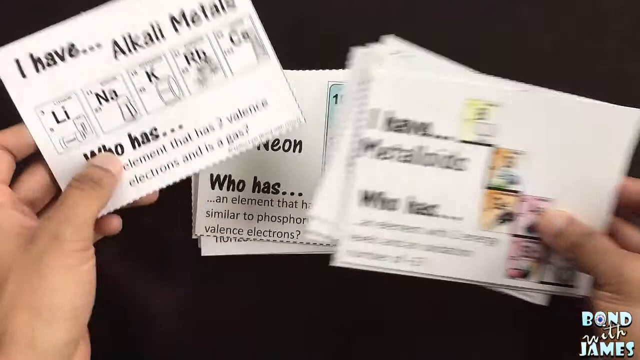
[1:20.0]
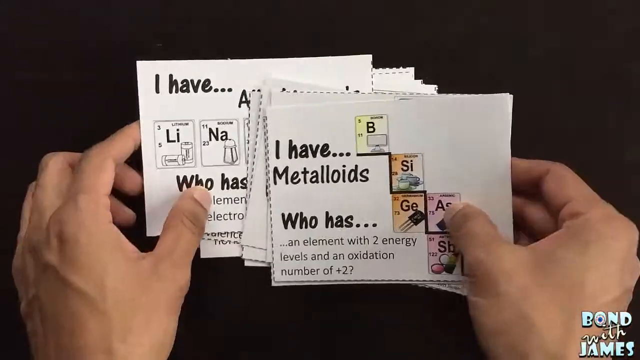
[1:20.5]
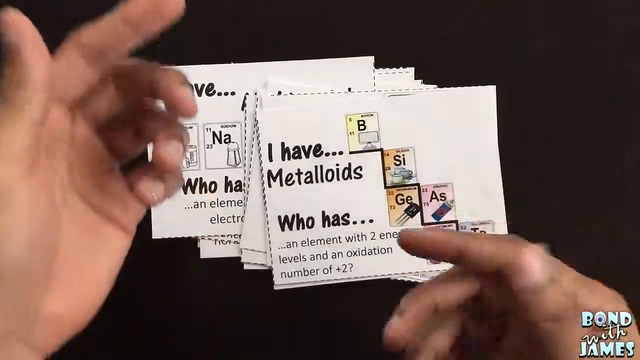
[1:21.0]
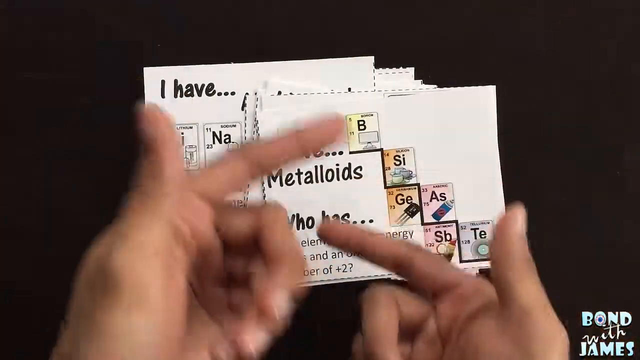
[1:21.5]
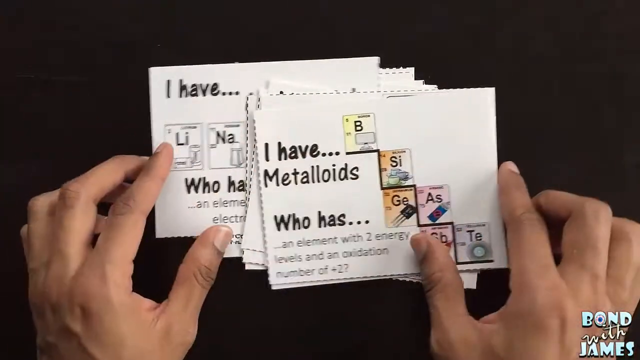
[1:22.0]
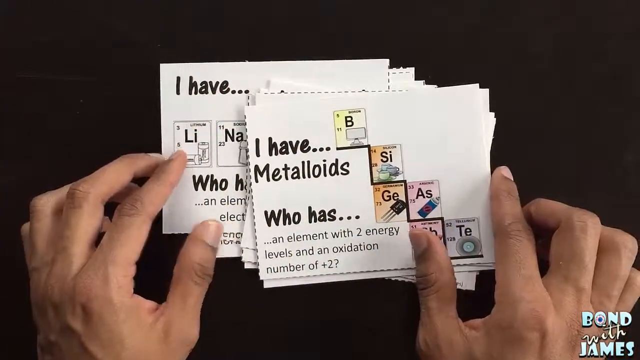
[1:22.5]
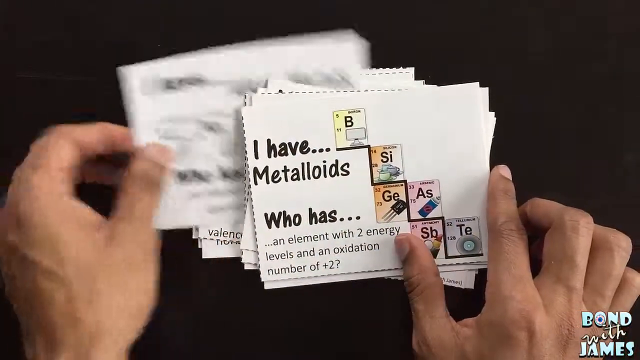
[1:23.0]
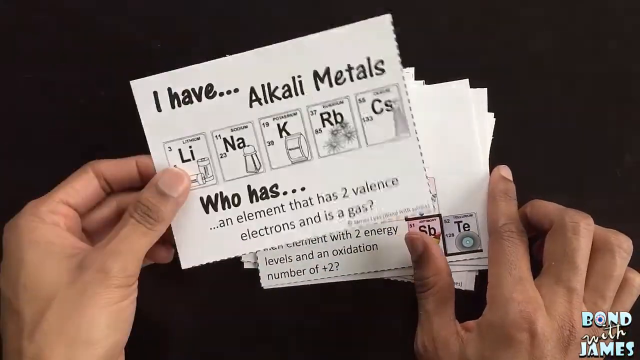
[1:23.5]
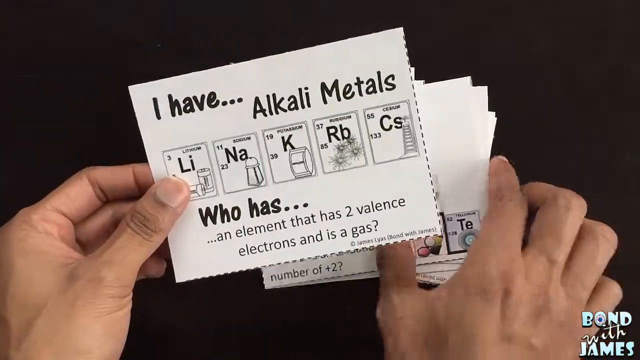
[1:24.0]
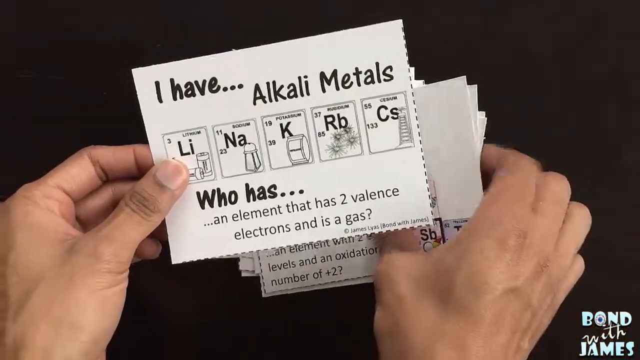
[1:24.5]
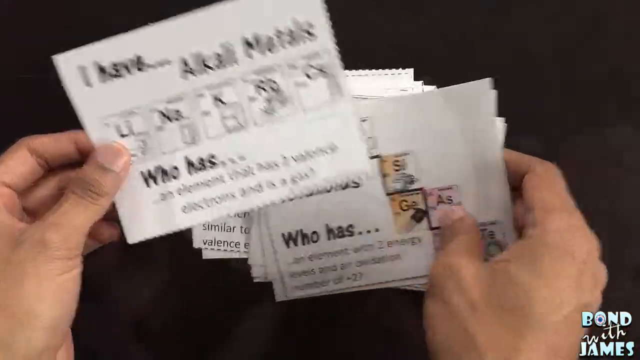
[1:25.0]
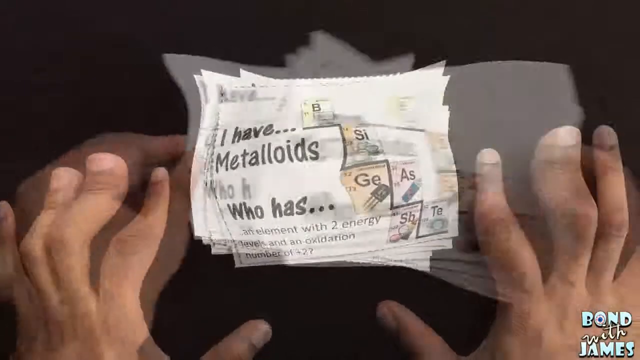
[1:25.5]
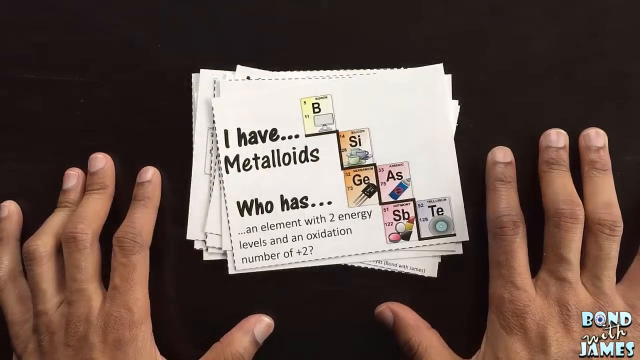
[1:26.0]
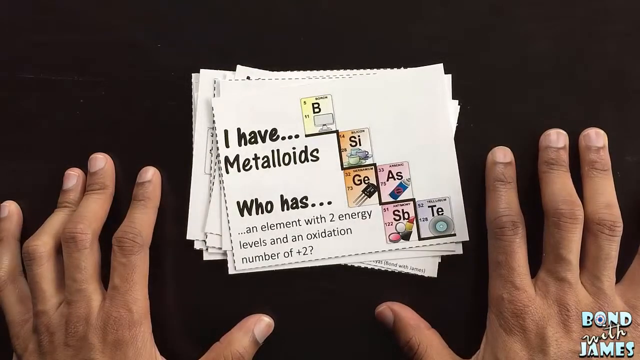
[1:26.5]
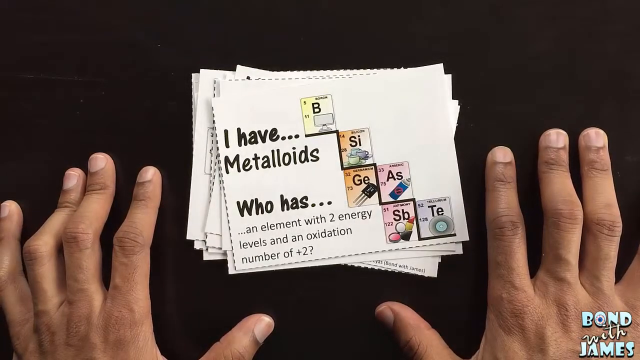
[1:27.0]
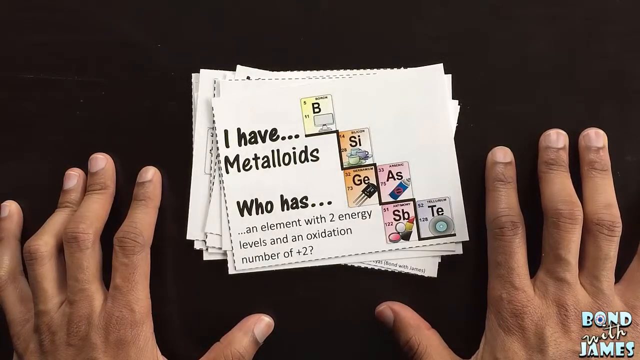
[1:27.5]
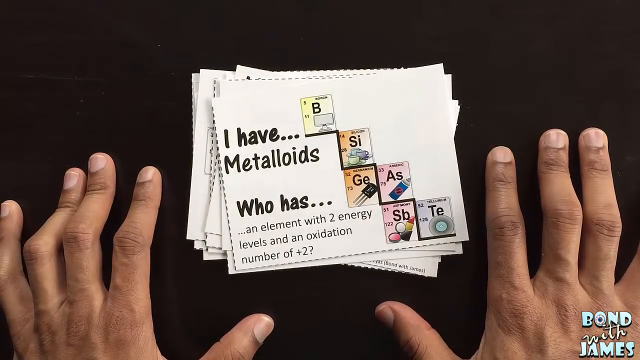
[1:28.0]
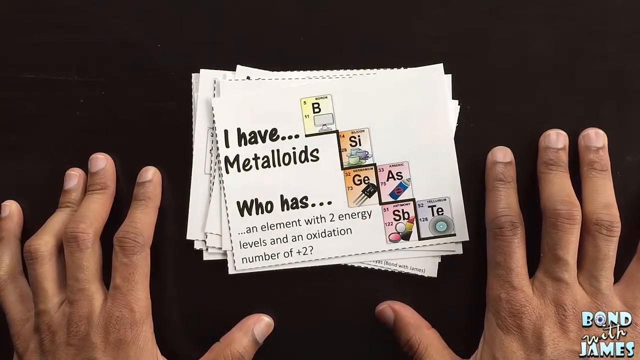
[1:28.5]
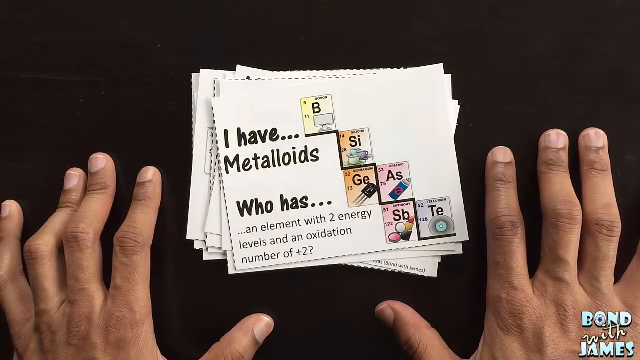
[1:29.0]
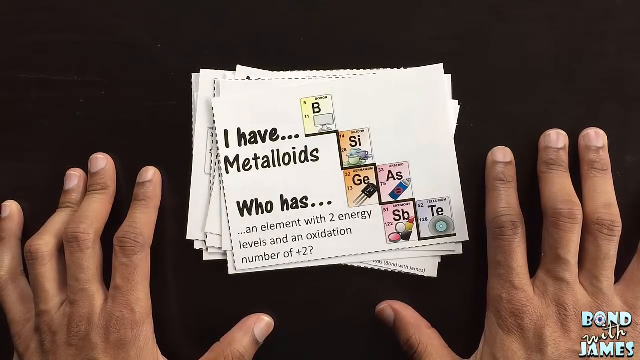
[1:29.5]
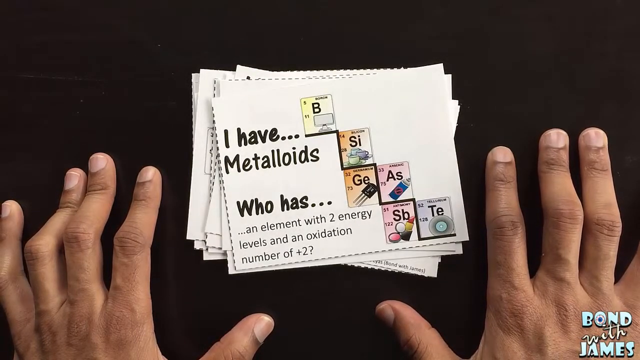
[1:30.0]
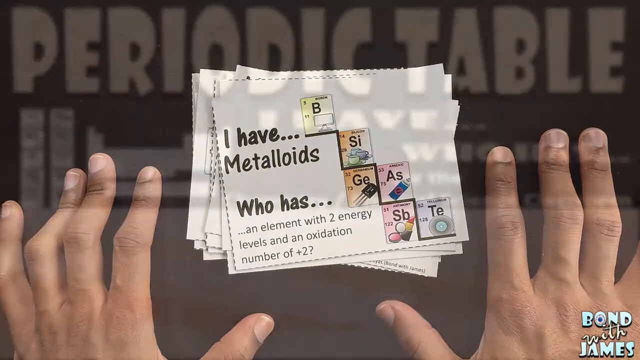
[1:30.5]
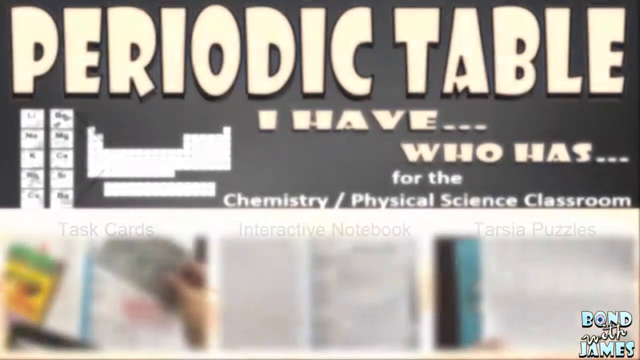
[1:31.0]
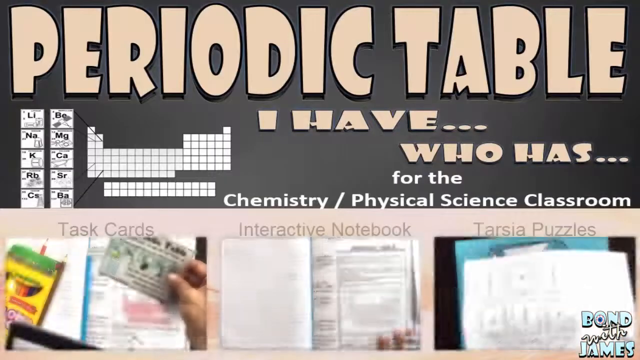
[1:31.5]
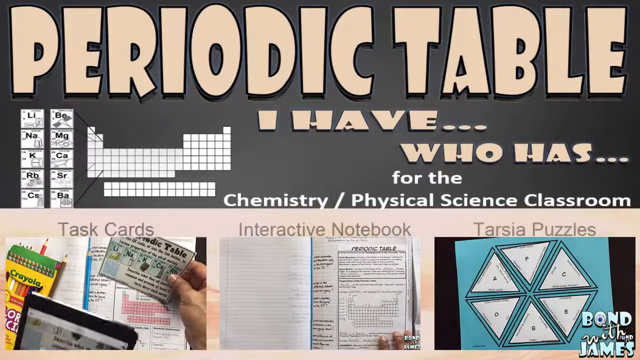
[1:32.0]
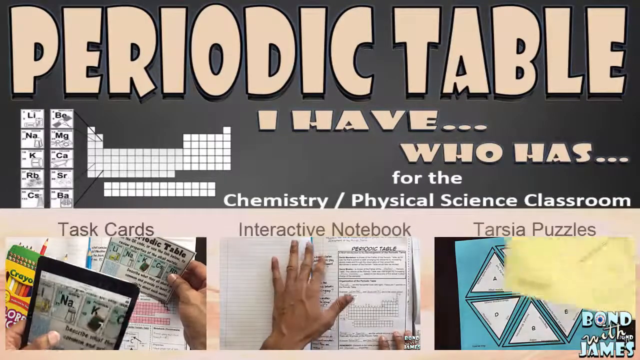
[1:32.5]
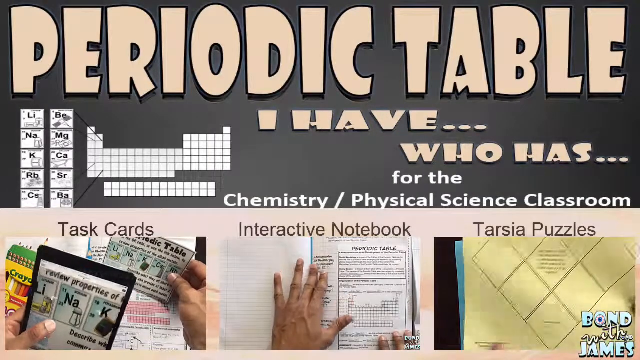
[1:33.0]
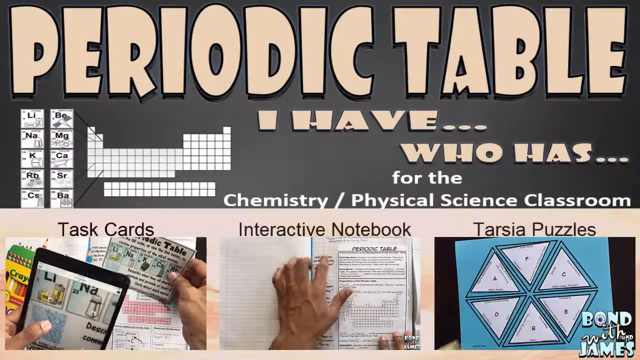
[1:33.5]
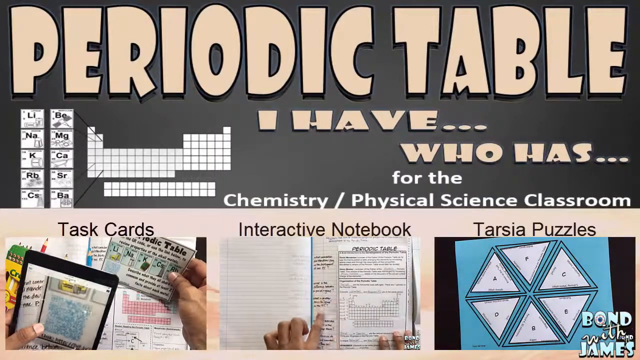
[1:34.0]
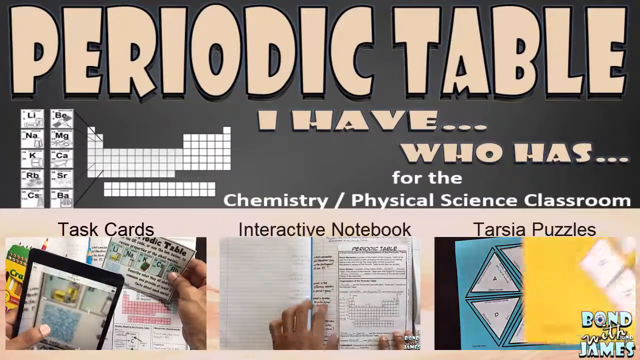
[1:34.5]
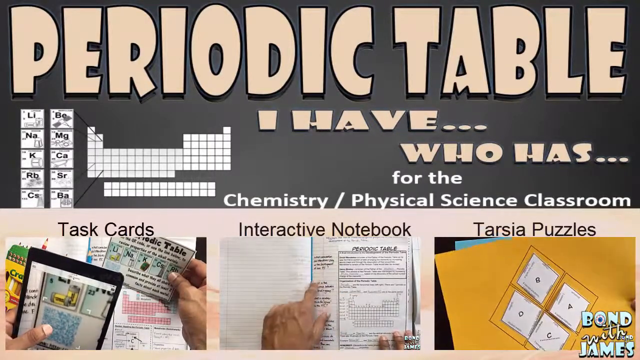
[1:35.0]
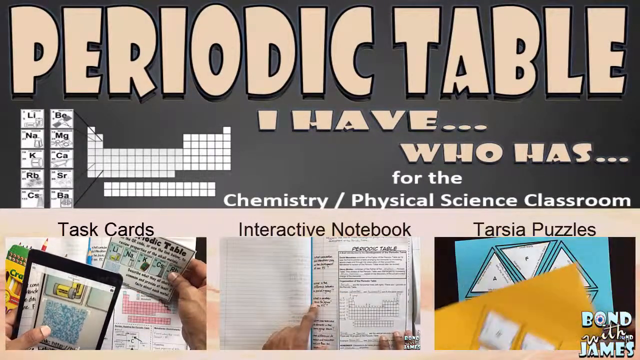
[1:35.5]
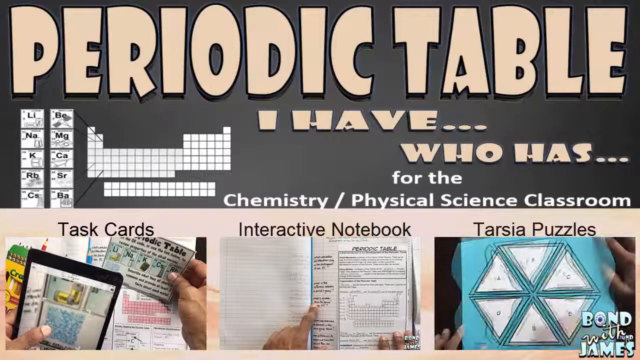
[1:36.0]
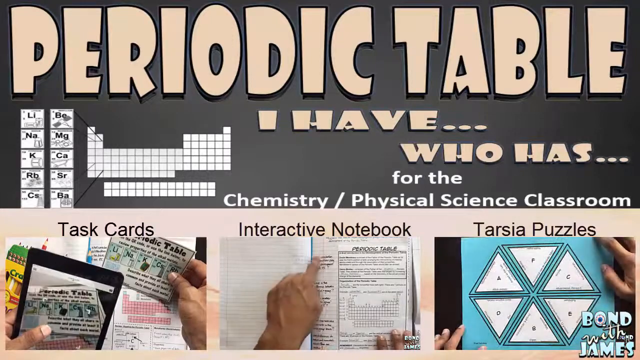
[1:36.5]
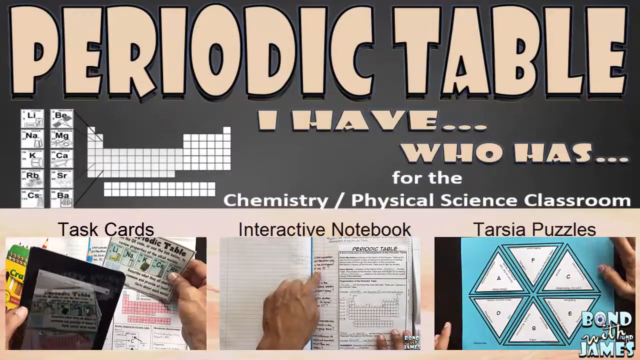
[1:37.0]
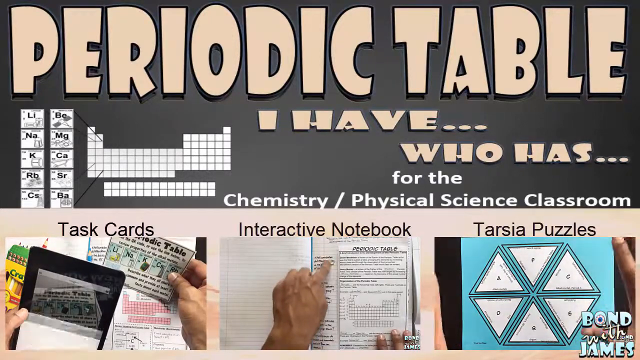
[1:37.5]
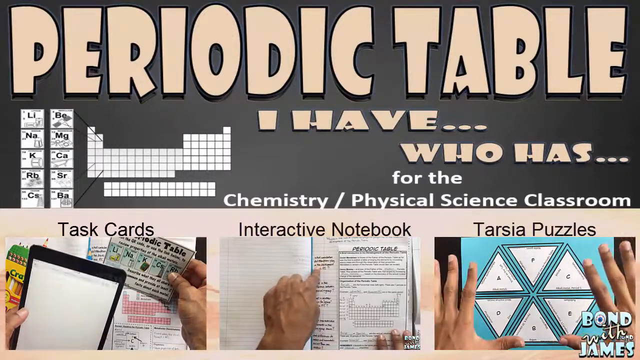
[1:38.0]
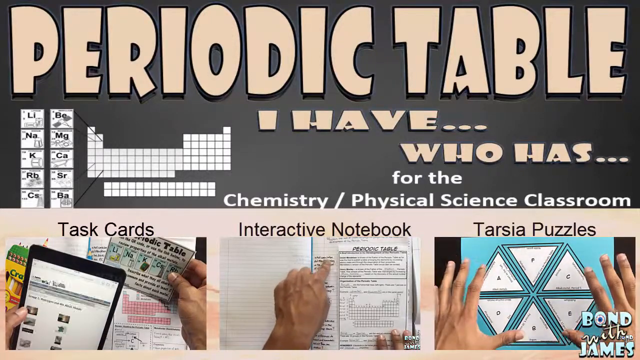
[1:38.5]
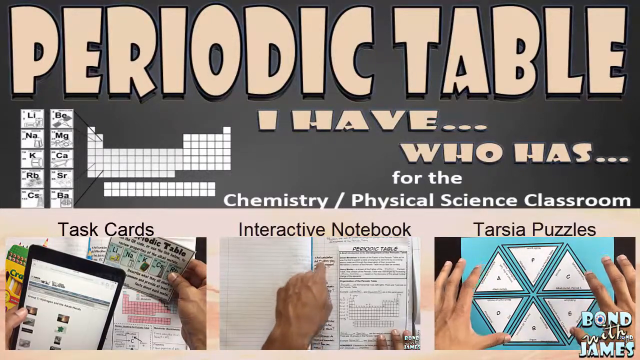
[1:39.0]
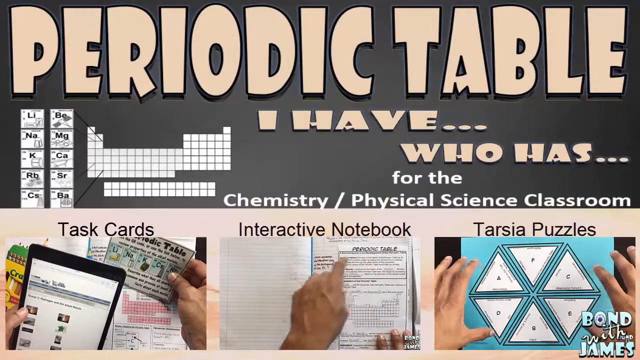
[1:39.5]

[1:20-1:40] The person makes various gestures with both hands, primarily using his thumbs and index fingers, and pulls out the "I have... Alkaline Metals" cue card. The scene transitions, and the "I have...Metalloids" card is at the top of the deck, with both hands placed flat on the dark wooden table and the cue cards at the center of the frame. The scene changes to the poster titled "Periodic Table". Right below the title is the phrase "I have, who has, for the Chemistry/Physical science classroom". In the bottom half of the poster are 3 columns labeled "Task Cards", "Interactive Notebook", and "Tarsia Puzzles", each with a slightly small video player below it showing a scene that seems connected to the column's title. The poster has a beige and black color theme.